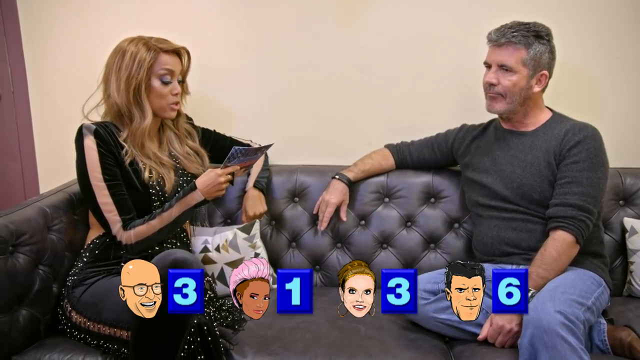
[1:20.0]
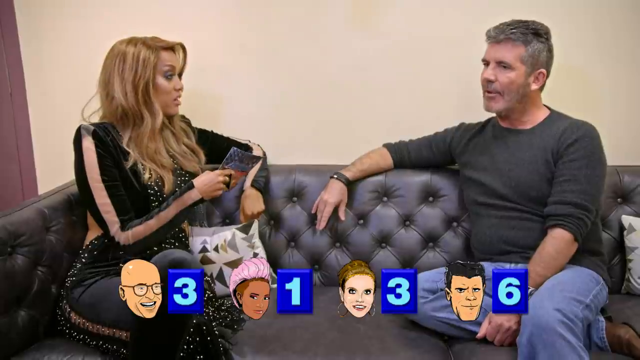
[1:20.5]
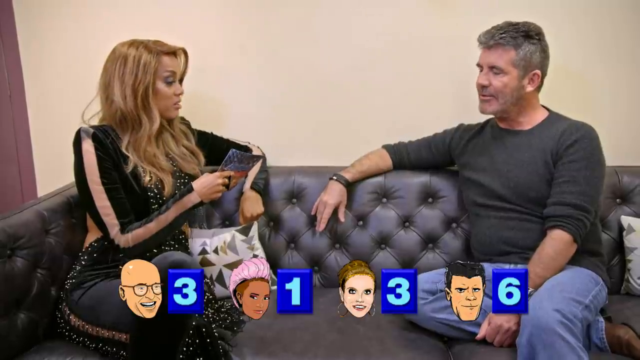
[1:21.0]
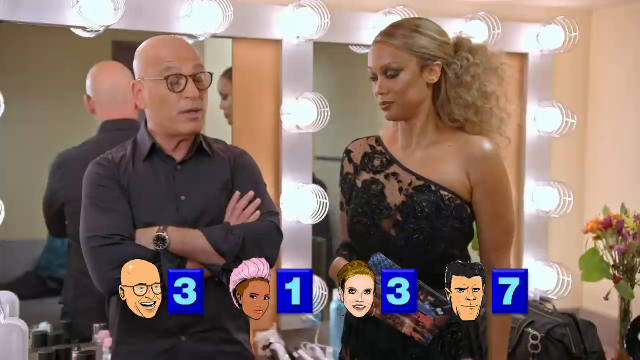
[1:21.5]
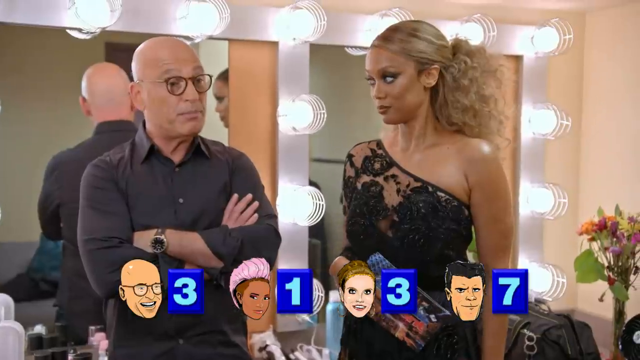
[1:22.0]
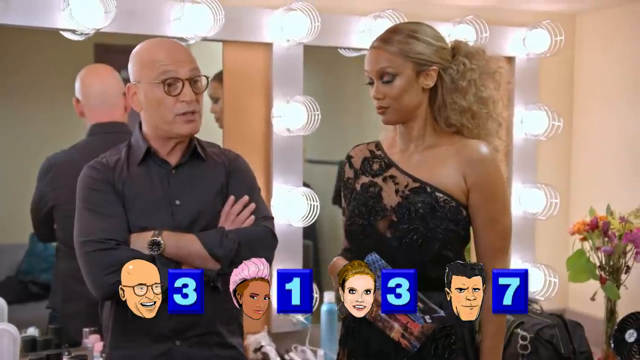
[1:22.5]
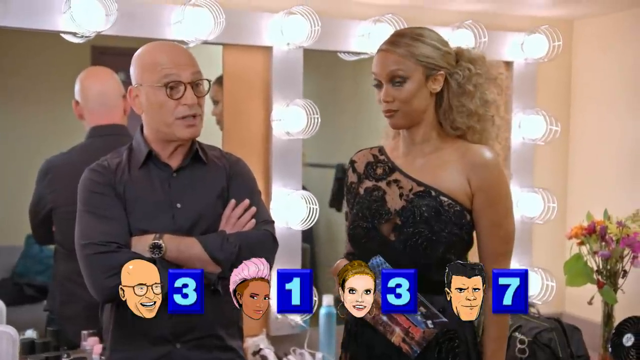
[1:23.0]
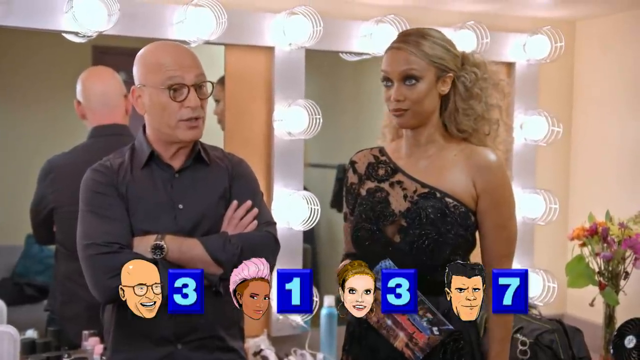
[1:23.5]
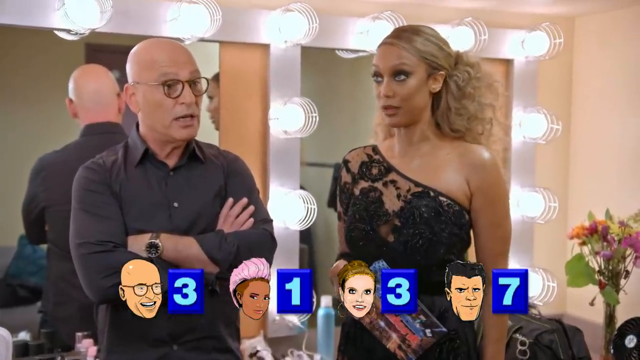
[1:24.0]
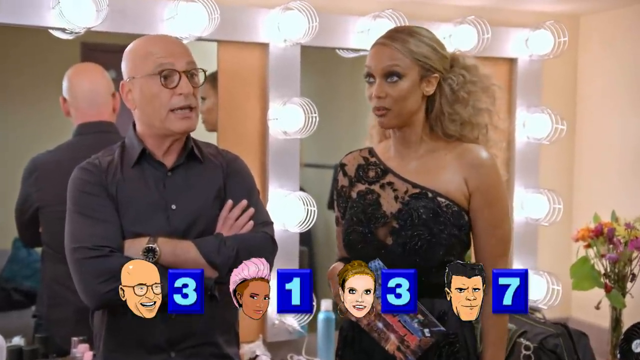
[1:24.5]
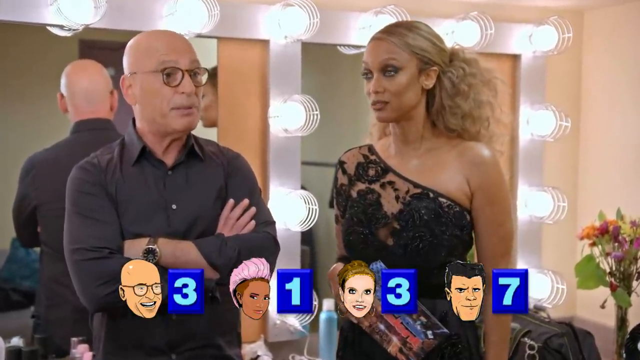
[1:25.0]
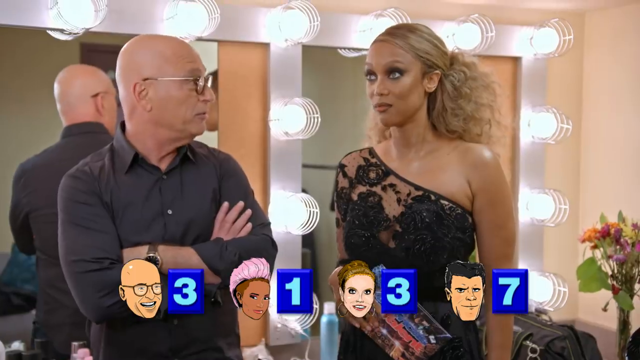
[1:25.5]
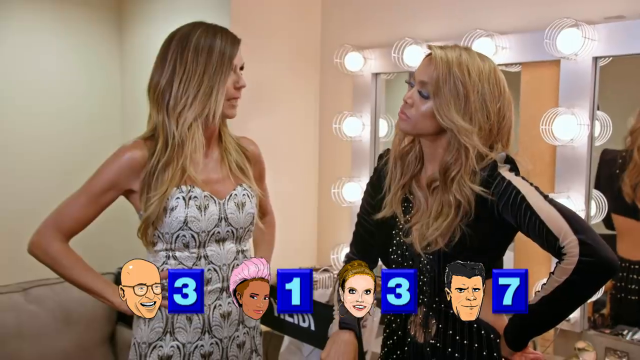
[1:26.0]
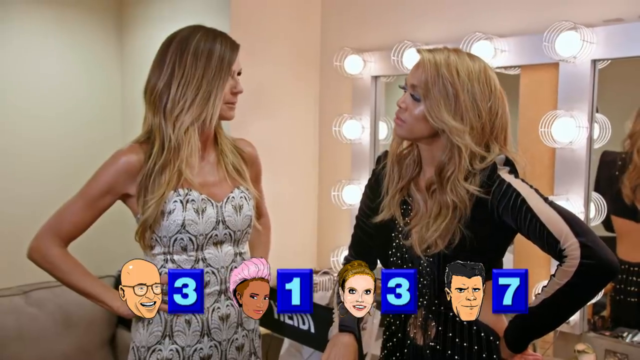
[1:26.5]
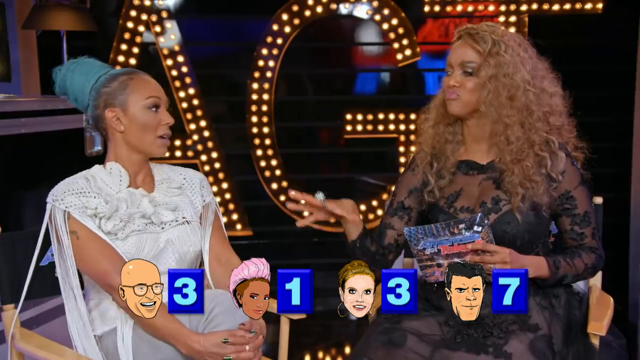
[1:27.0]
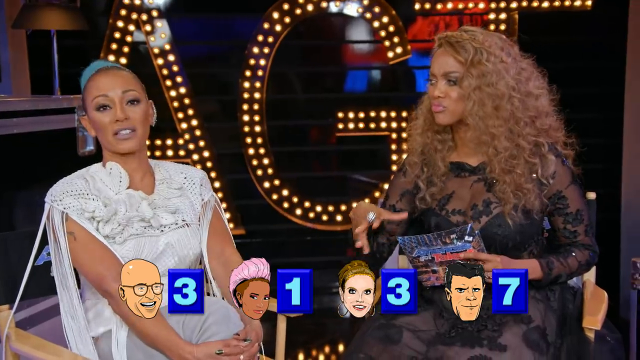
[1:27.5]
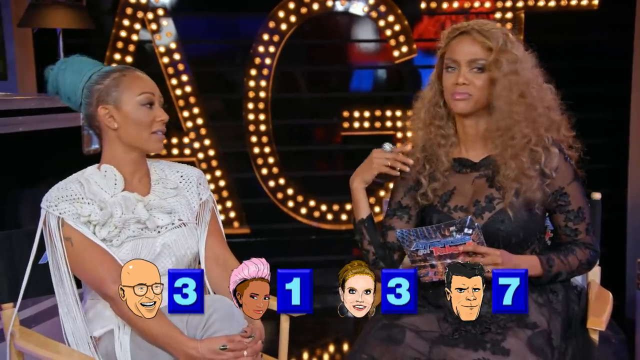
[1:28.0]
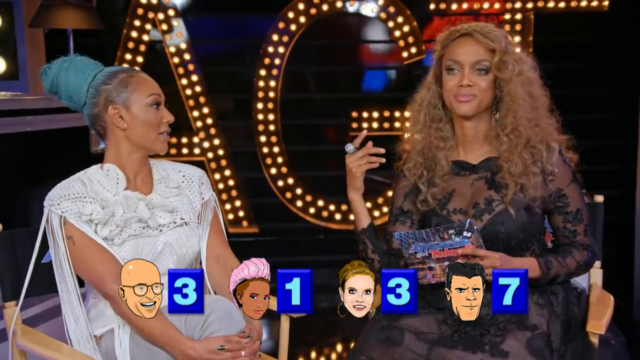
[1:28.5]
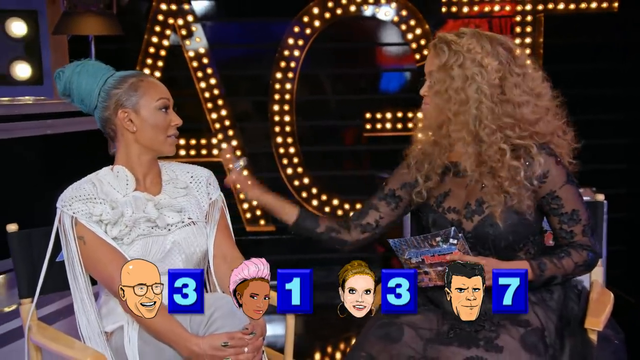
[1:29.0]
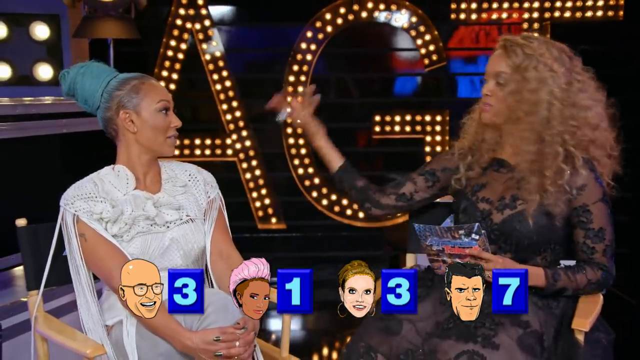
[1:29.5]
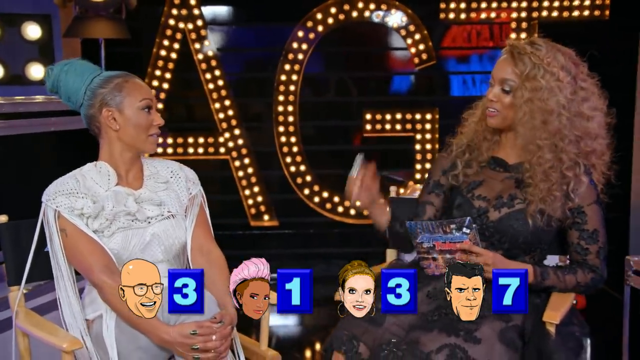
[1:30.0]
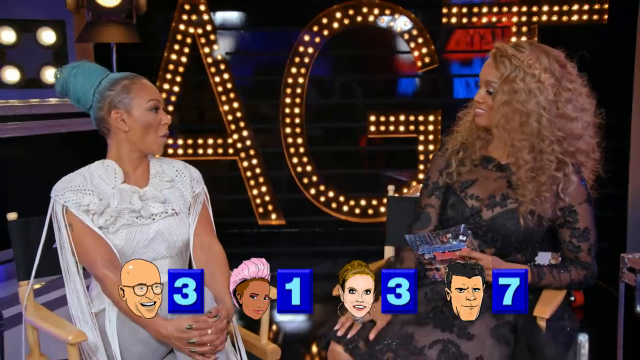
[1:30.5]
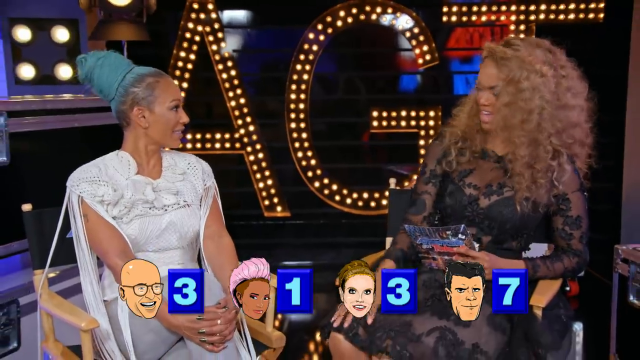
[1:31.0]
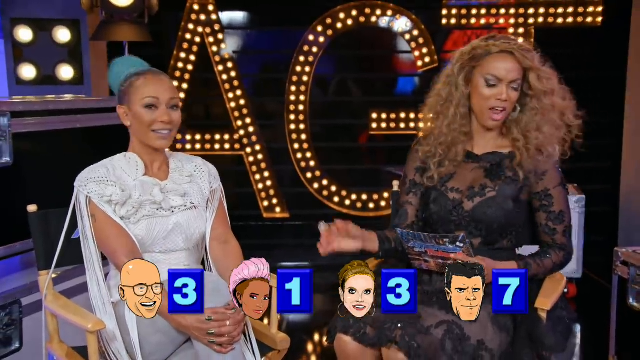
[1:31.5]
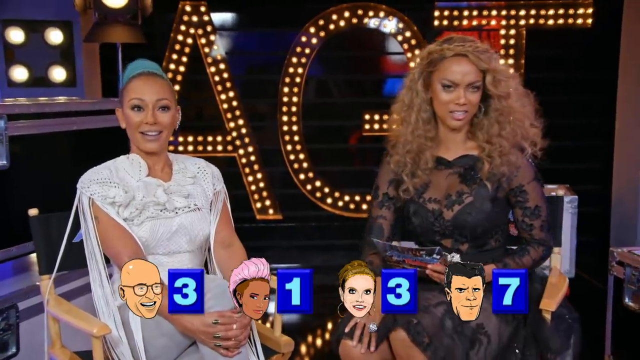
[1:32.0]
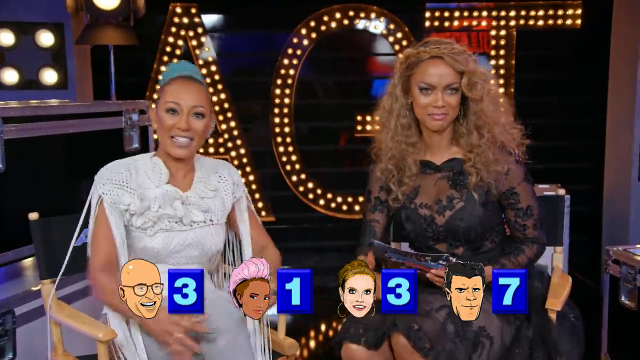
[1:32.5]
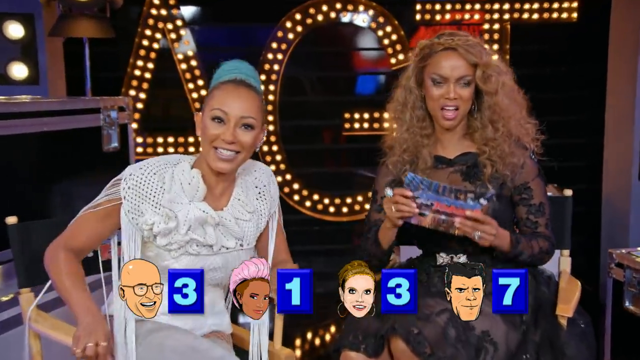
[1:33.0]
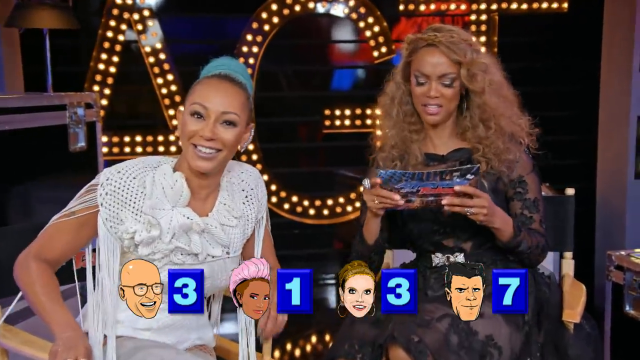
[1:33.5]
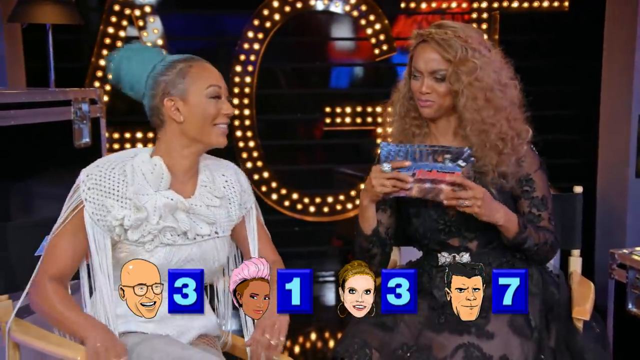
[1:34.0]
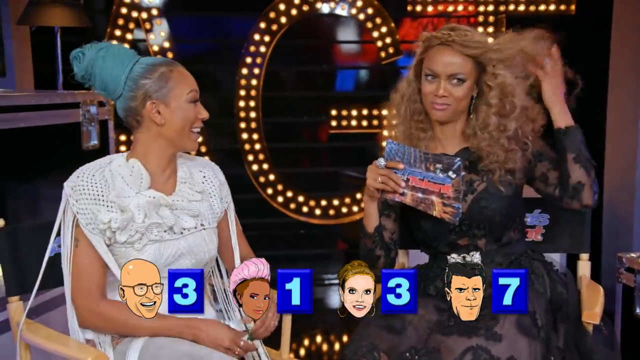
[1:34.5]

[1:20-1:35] Tyra speaks to each judge, reading her questions from a note card. She reads a question to Simon, who kind of nods in agreement. In the dressing room with Howie Mandel, she kind of leans forward a little while talking; it seems serious, as Tyra rolls her eyes and bobs her head while Howie has his arms crossed and looks away from her. The woman judge with darker skin kind of makes a face and looks away as Tyra finishes, holding her arms in front of her, then suddenly leans forward out of the chair as if to say "what?" Tyra and Heidi Klum each have a hand on their own hip and lean toward each other; it looks like a semi-serious conversation, with neither smiling as they look at each other.